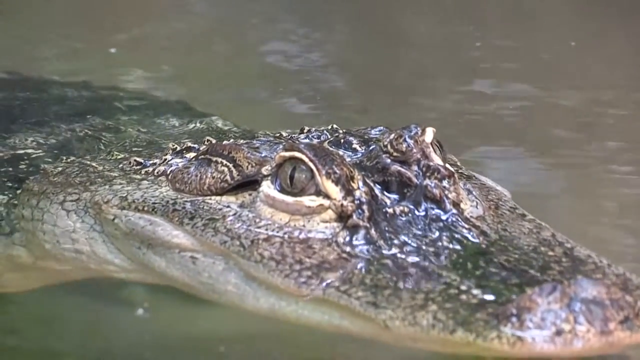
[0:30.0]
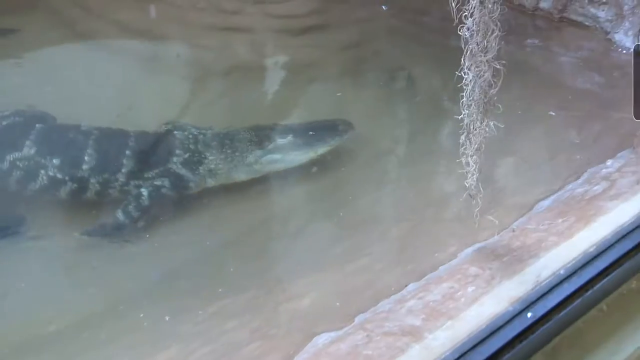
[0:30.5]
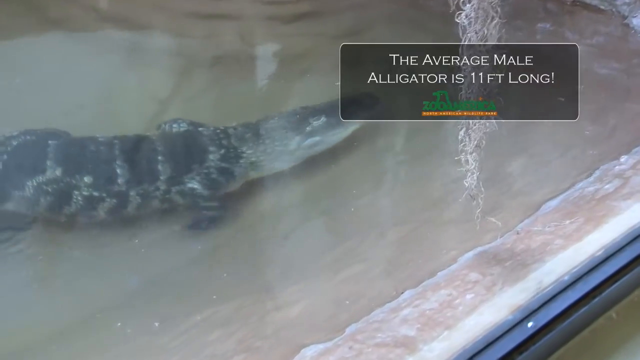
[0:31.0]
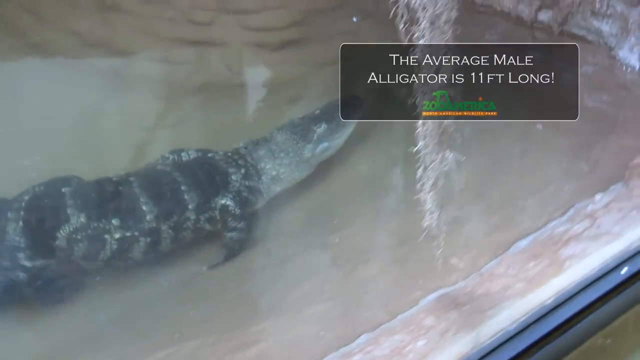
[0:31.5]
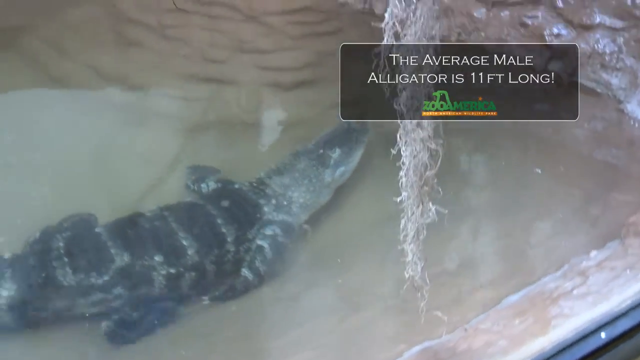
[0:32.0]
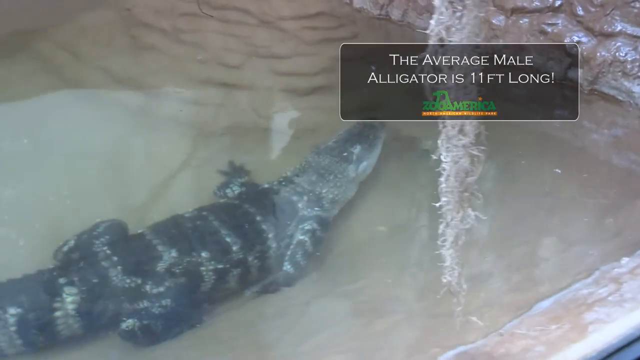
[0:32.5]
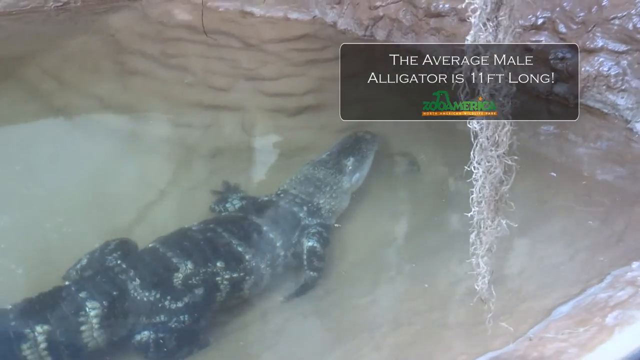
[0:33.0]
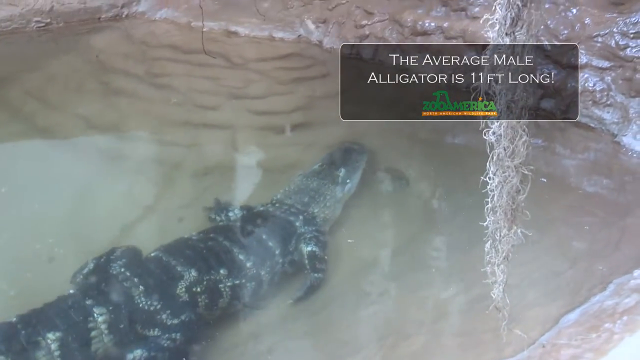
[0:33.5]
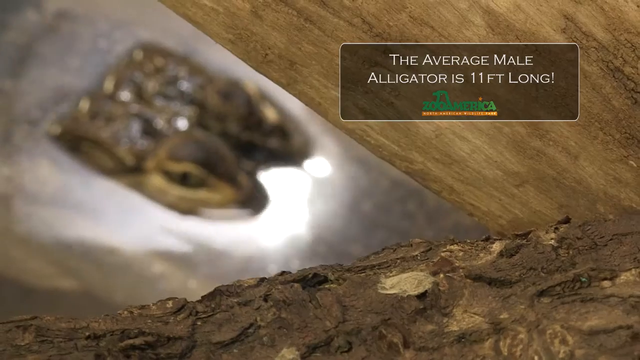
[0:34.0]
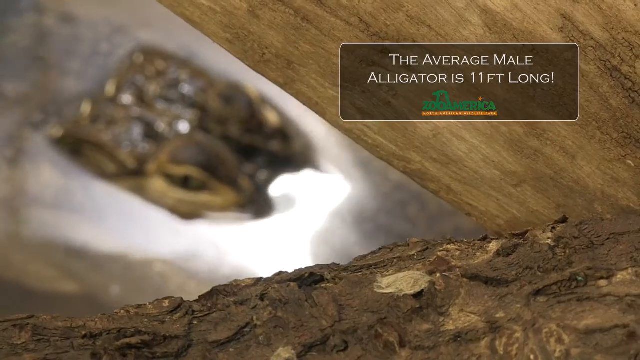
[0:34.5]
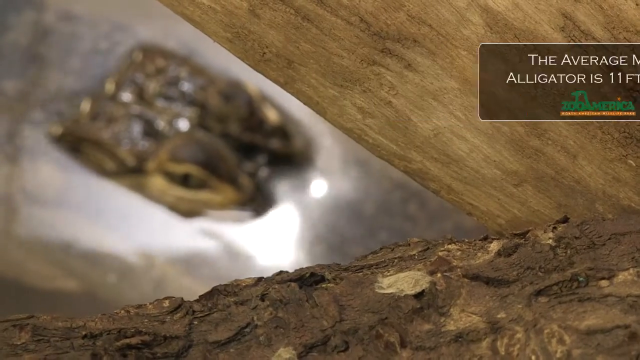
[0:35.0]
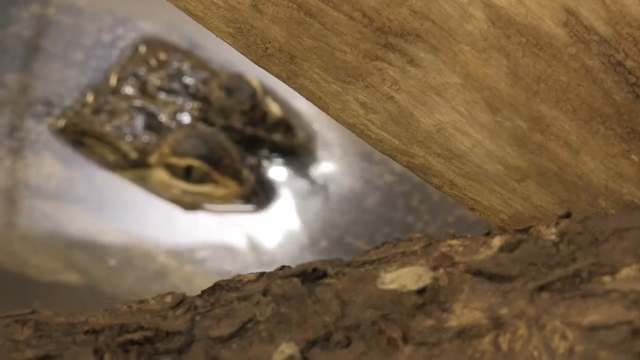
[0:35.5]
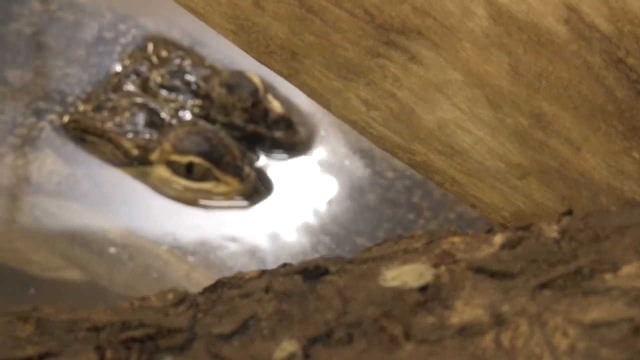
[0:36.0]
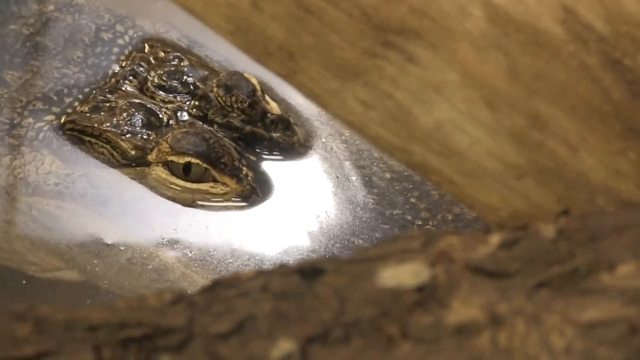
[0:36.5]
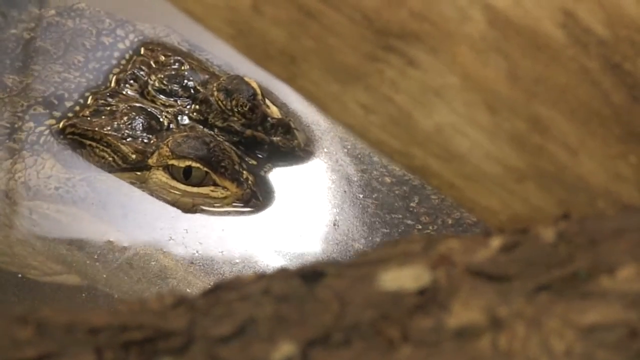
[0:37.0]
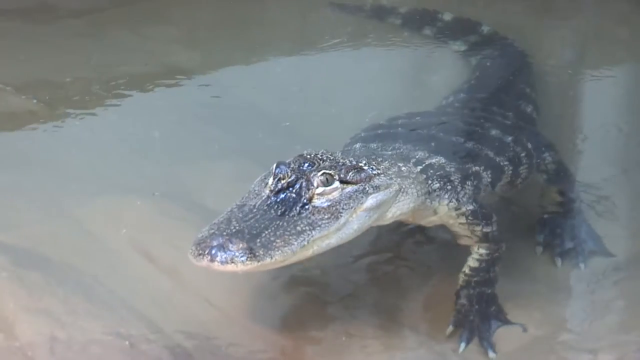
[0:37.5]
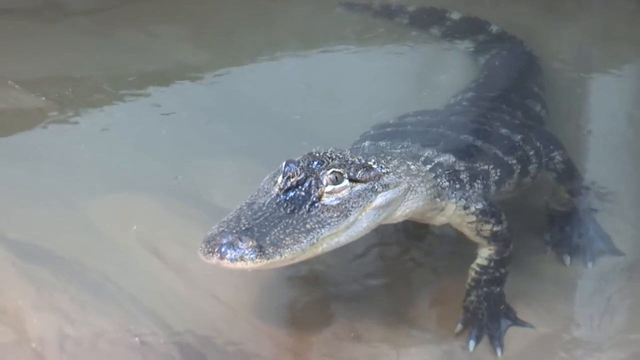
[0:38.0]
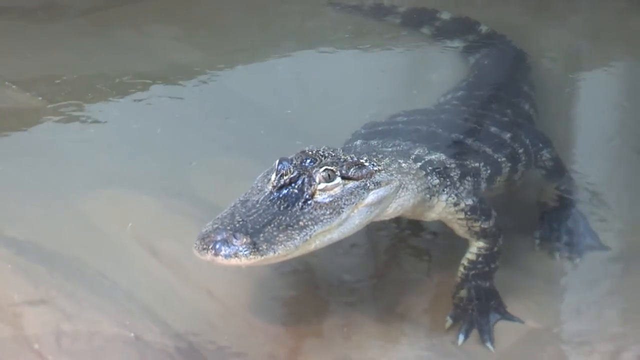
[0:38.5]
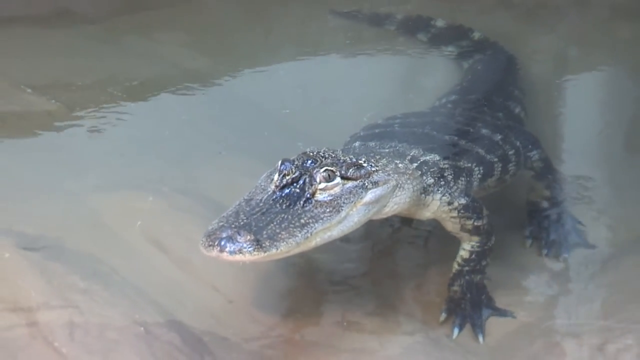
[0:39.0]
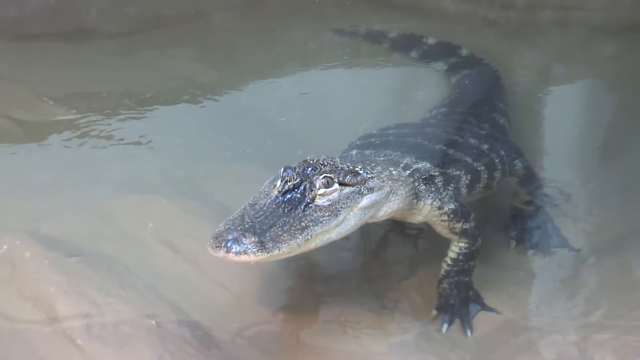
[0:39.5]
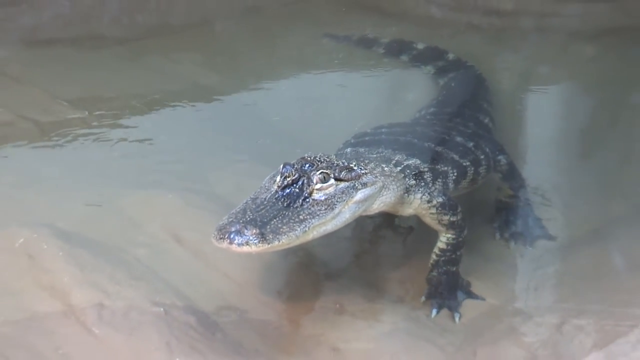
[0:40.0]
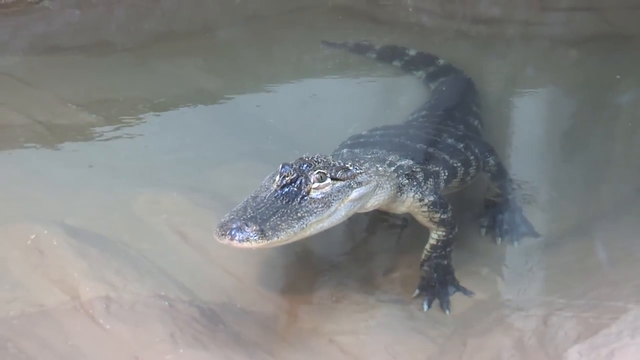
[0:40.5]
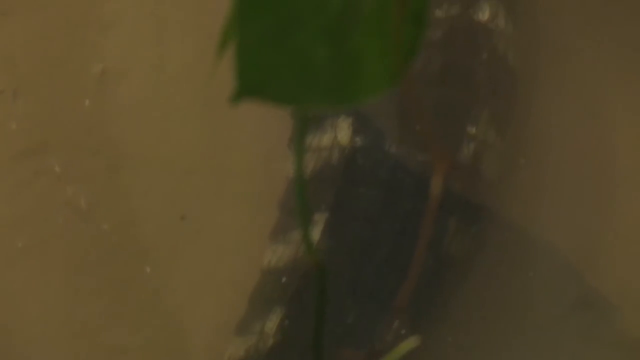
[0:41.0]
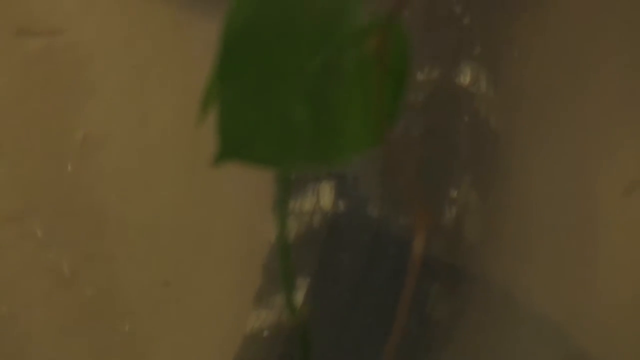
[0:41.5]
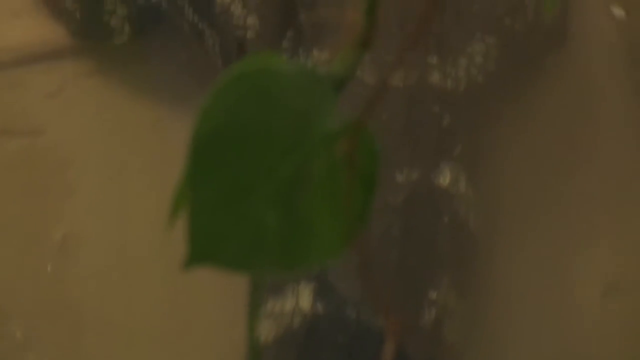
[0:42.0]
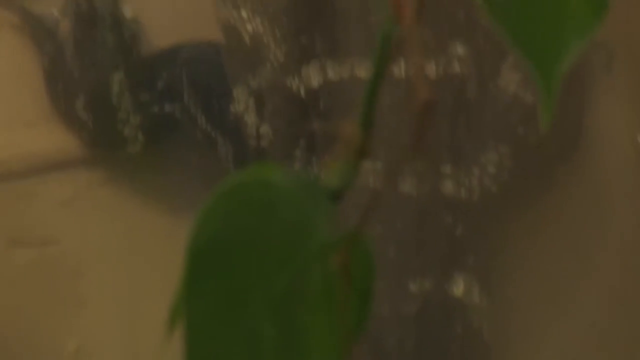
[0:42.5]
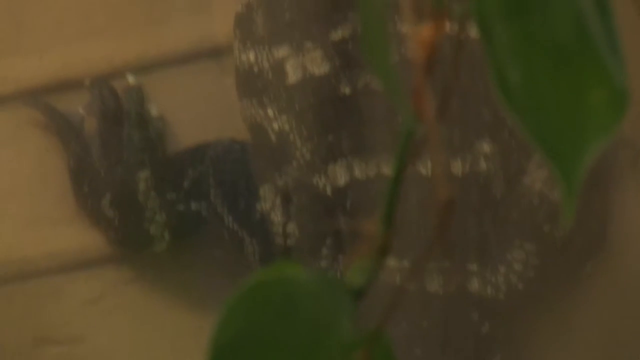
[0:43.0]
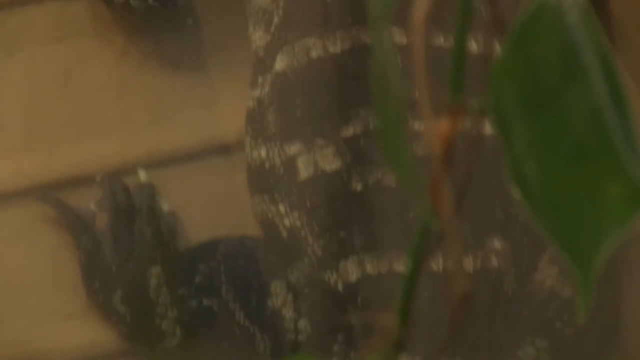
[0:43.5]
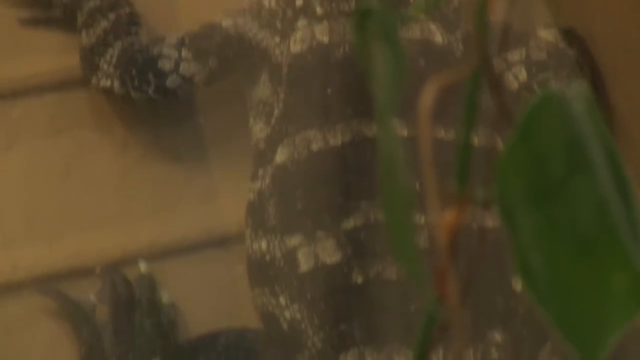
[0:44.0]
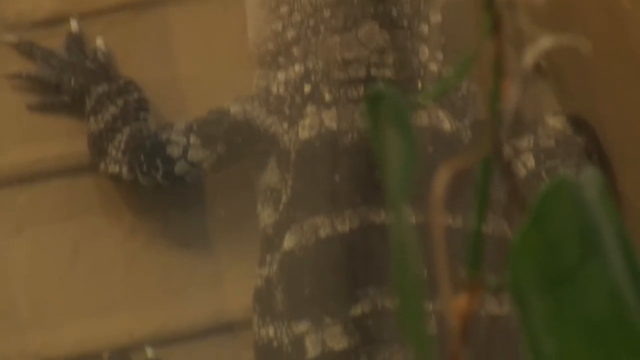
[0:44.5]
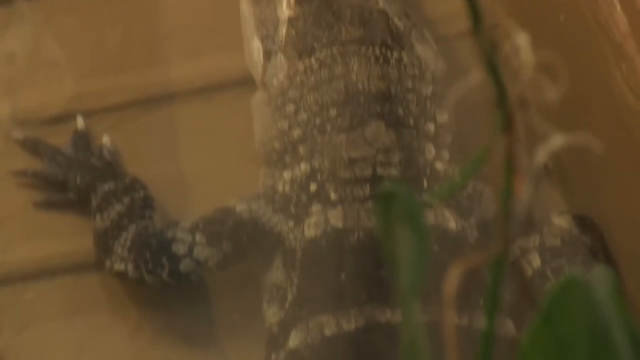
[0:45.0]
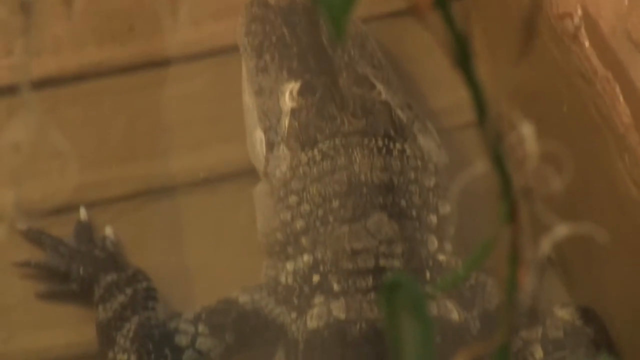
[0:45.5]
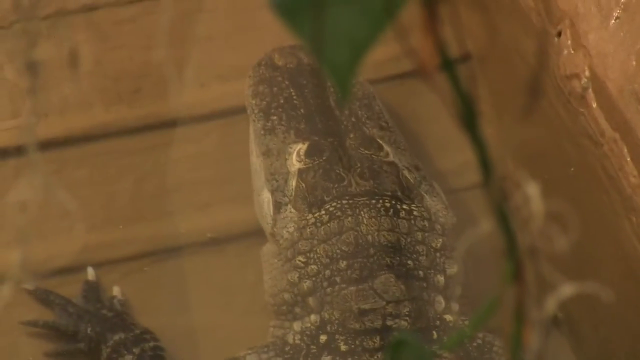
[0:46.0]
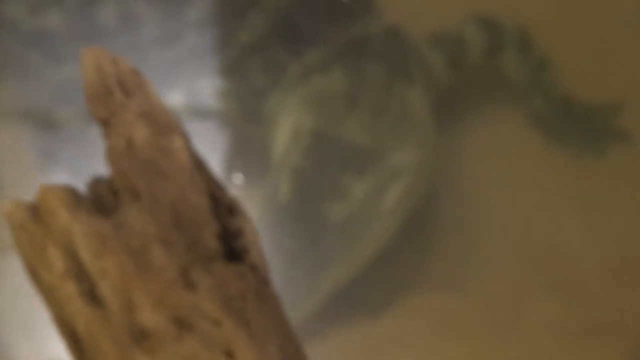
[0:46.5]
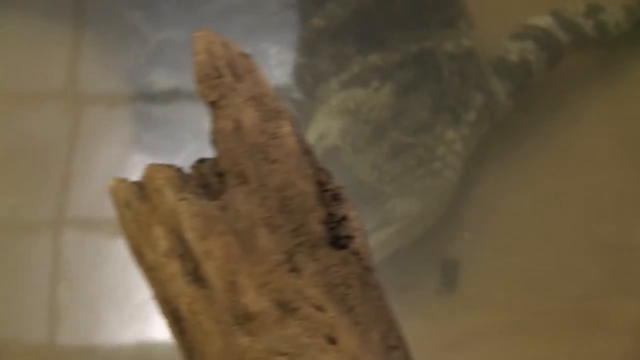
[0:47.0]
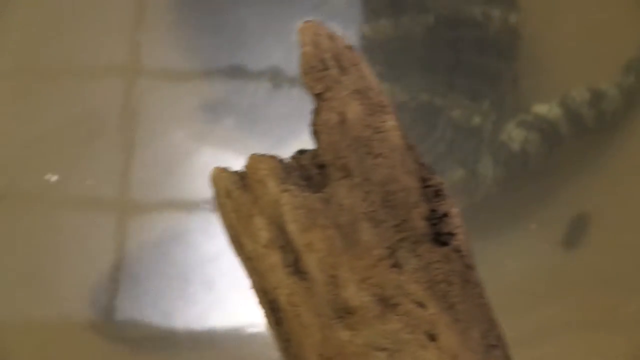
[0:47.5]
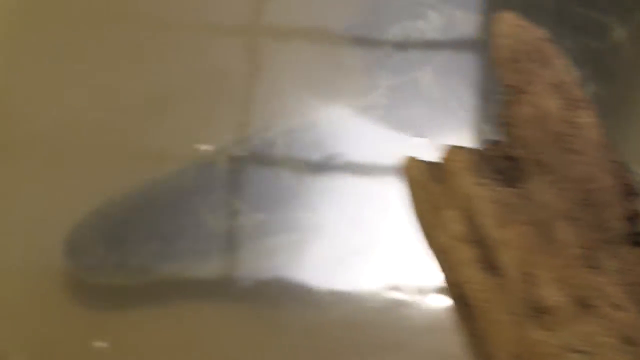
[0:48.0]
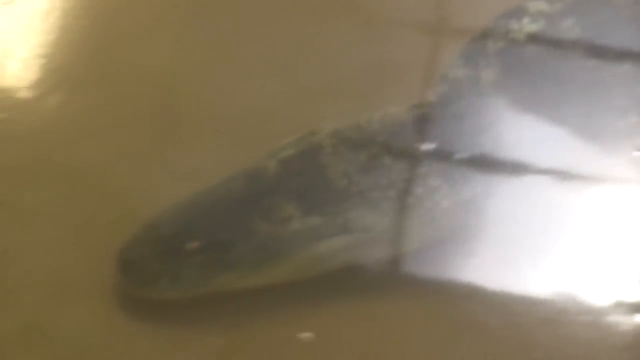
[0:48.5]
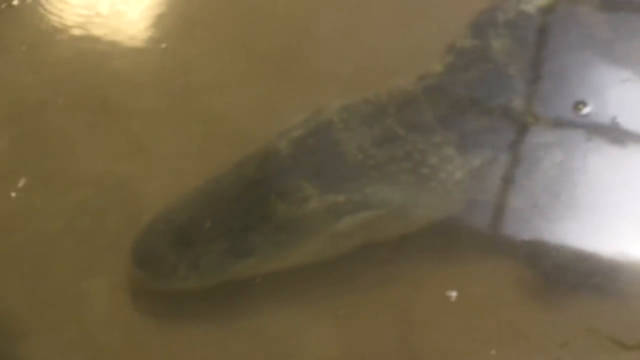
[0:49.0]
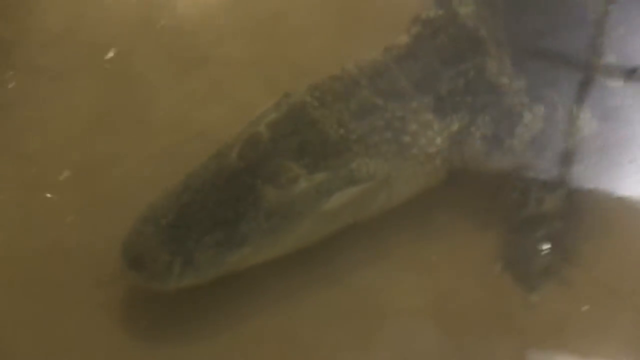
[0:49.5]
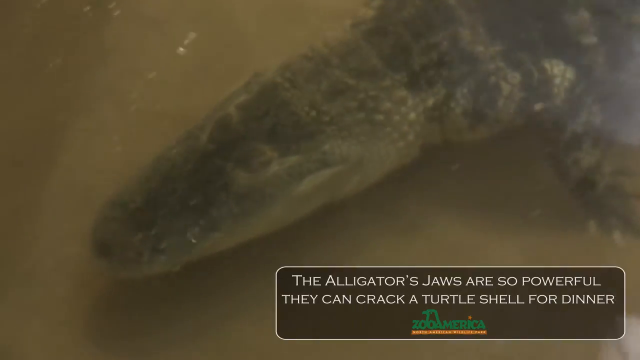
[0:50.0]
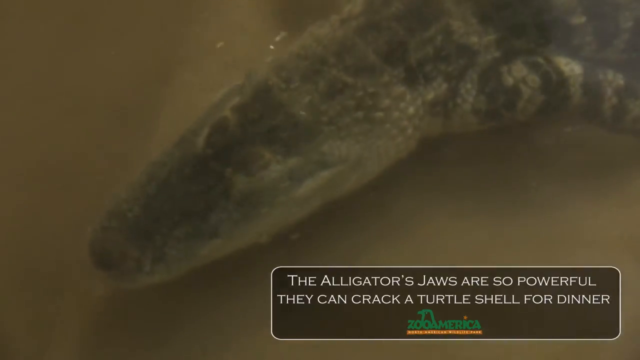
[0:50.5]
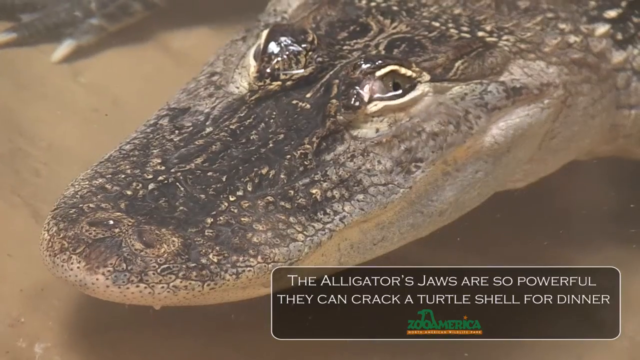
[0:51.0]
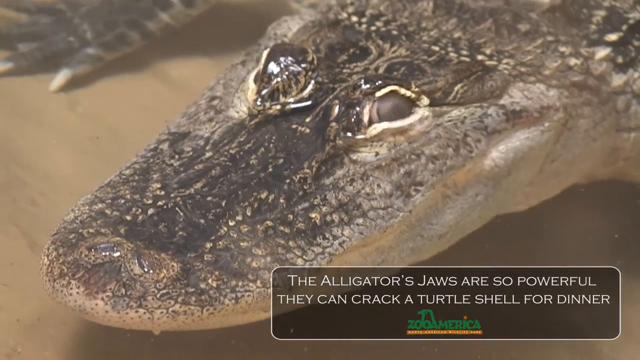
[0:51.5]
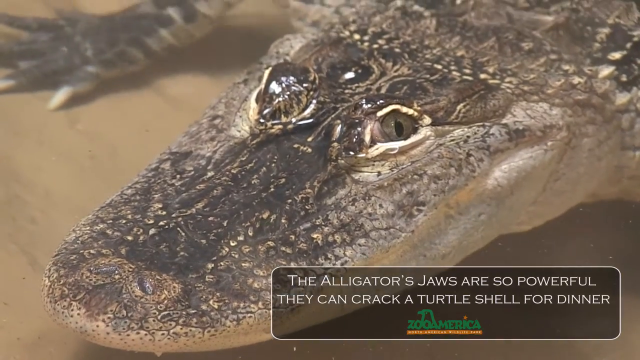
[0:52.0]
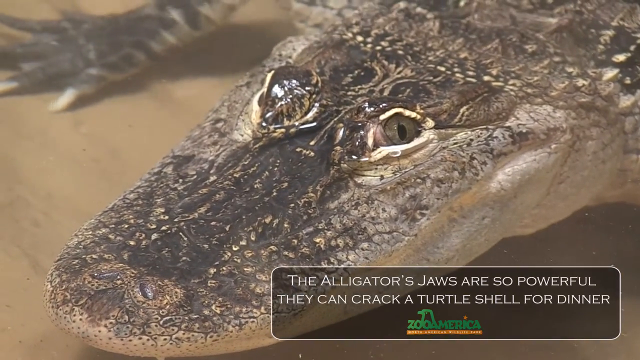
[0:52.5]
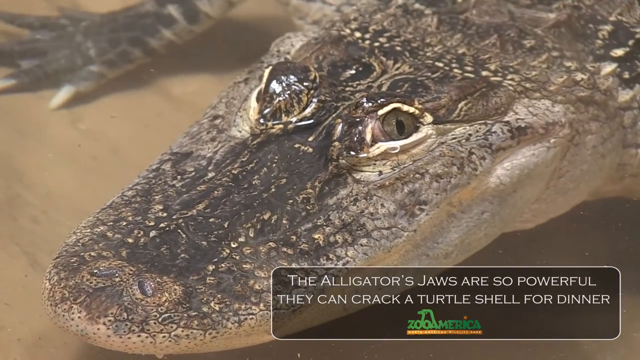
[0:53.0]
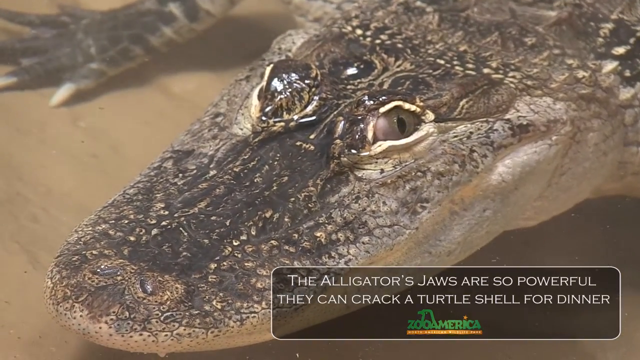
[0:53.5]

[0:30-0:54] A very large American alligator swims underwater, followed by a few screen transitions. Text on the screen reads "the average male alligator is 11 feet long!" Various American alligators are then shown underwater in different settings and from different angles. Text appears about how the American alligator's jaws are so powerful they can crack a turtle's shell for dinner, and the alligator's apparently retractable, double eyelids are shown. More screen transitions follow, featuring Zoo America, North American Wildlife Park and American alligators.